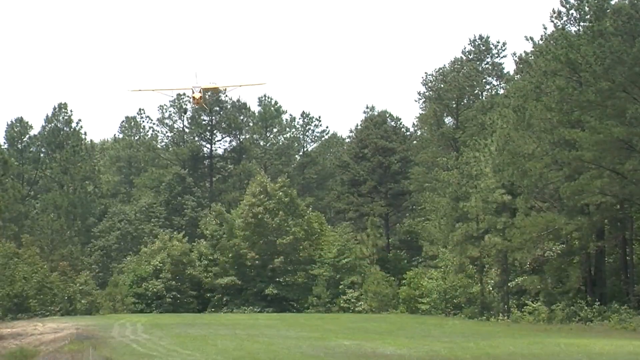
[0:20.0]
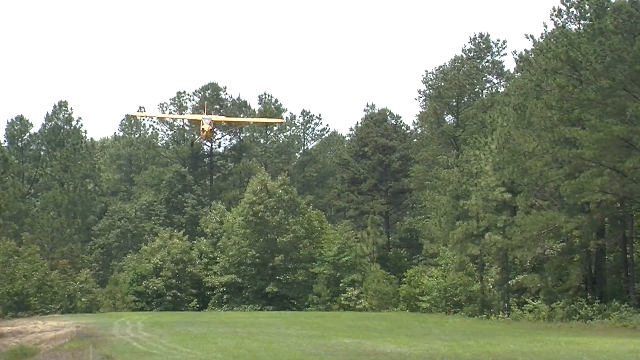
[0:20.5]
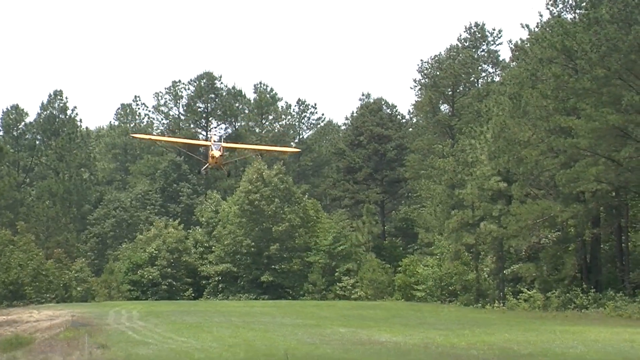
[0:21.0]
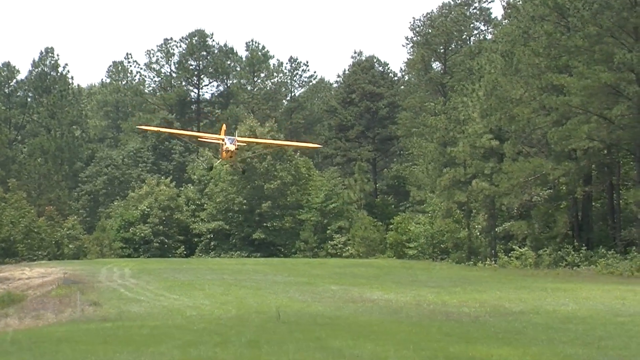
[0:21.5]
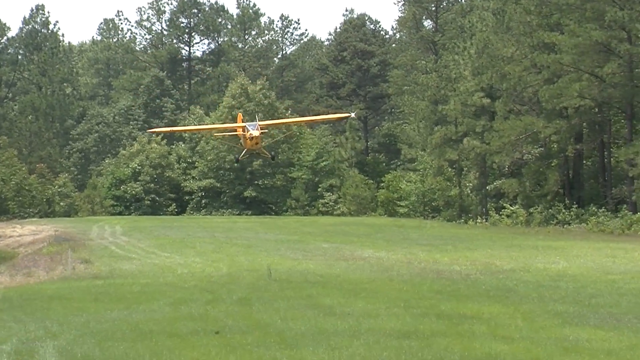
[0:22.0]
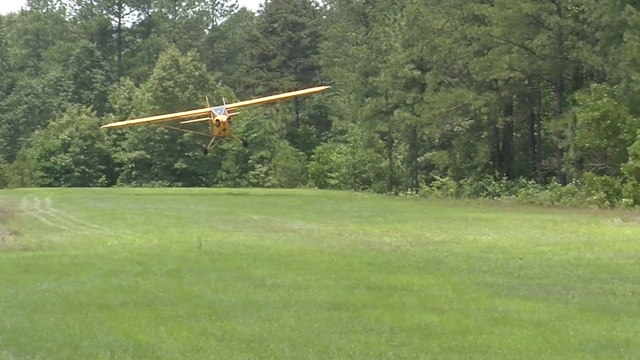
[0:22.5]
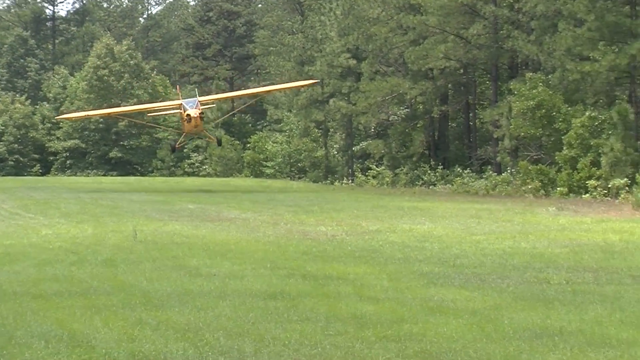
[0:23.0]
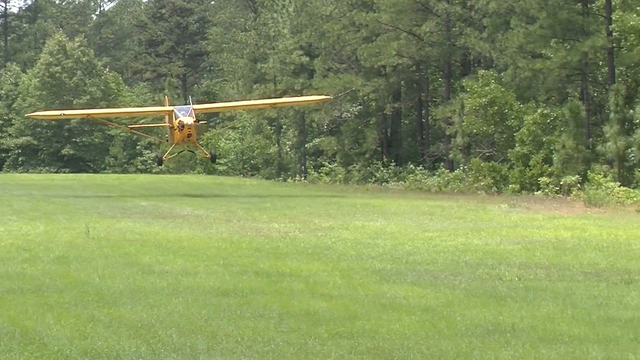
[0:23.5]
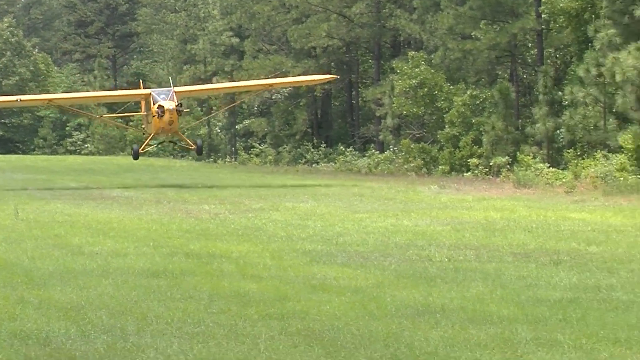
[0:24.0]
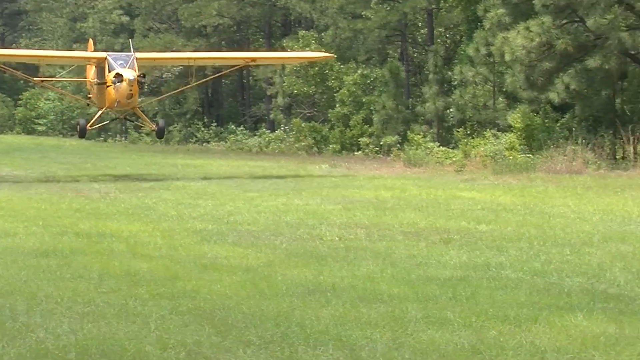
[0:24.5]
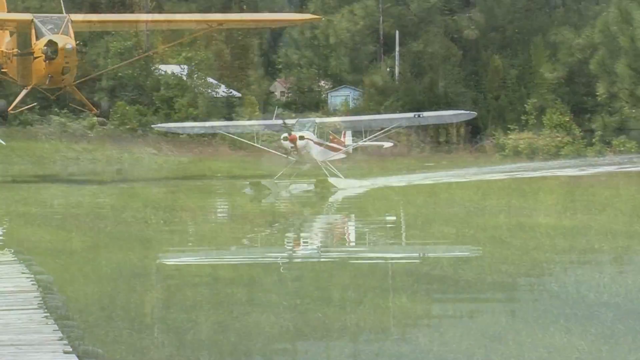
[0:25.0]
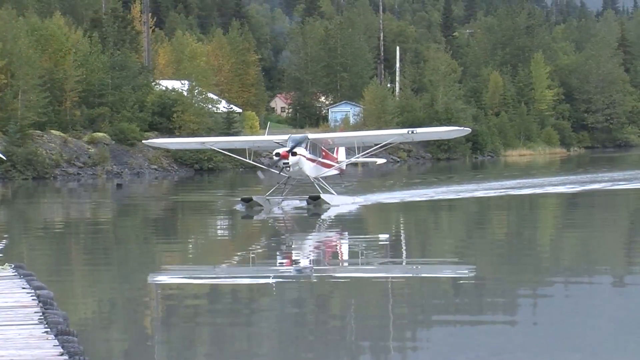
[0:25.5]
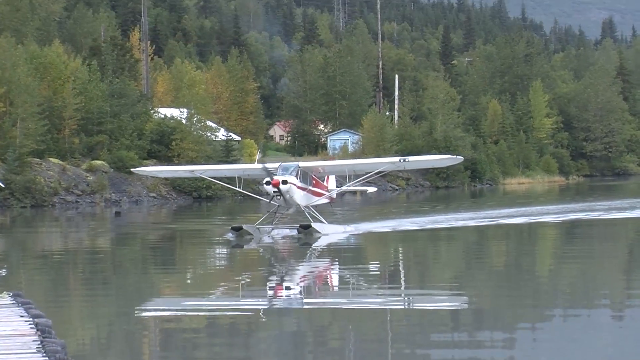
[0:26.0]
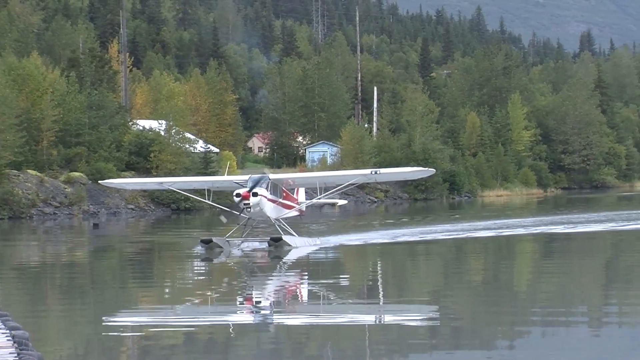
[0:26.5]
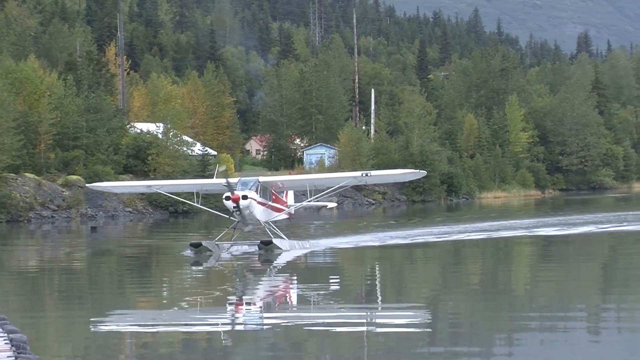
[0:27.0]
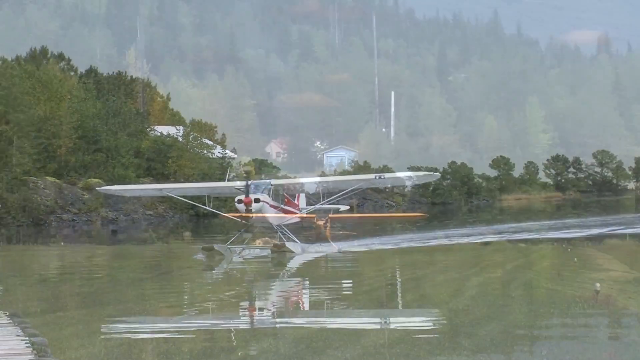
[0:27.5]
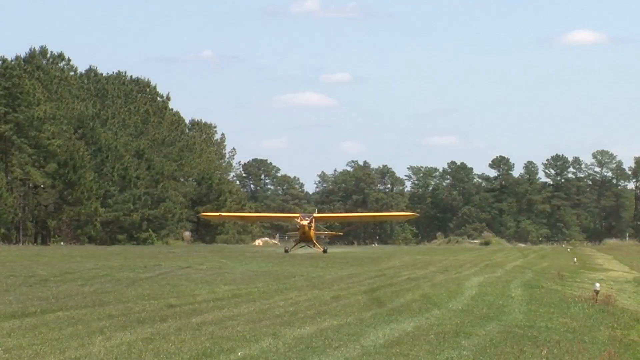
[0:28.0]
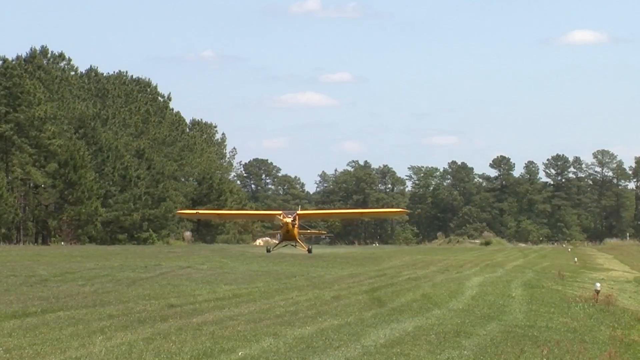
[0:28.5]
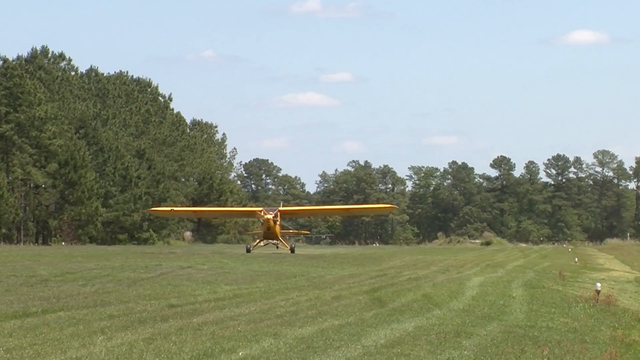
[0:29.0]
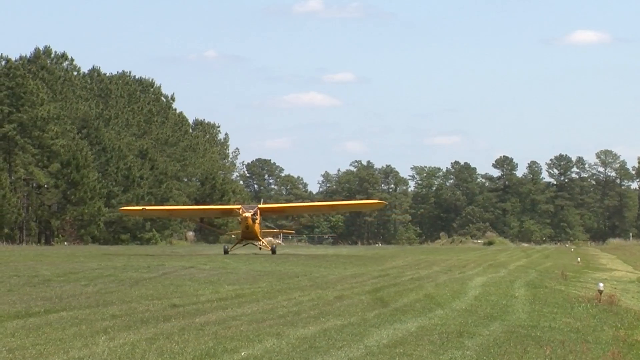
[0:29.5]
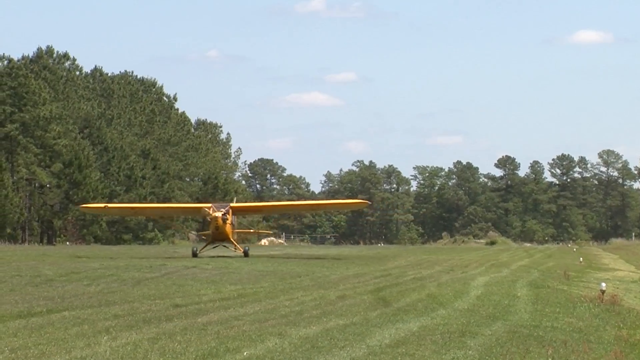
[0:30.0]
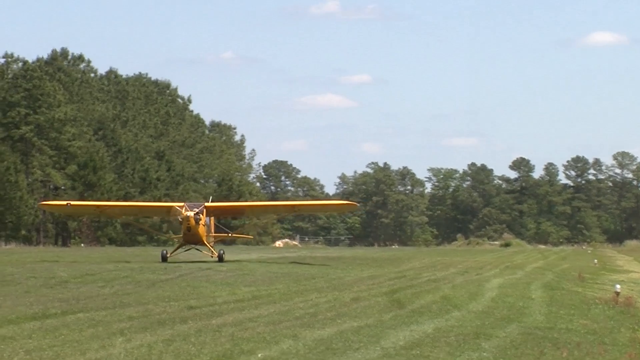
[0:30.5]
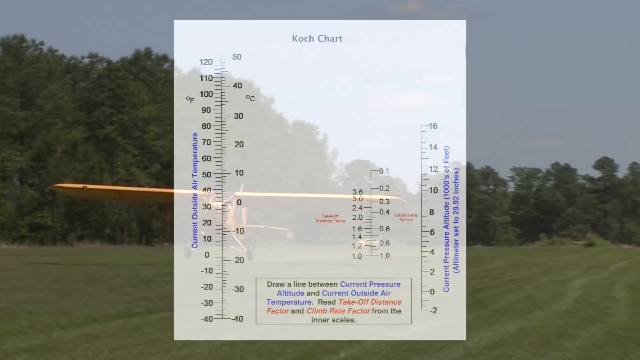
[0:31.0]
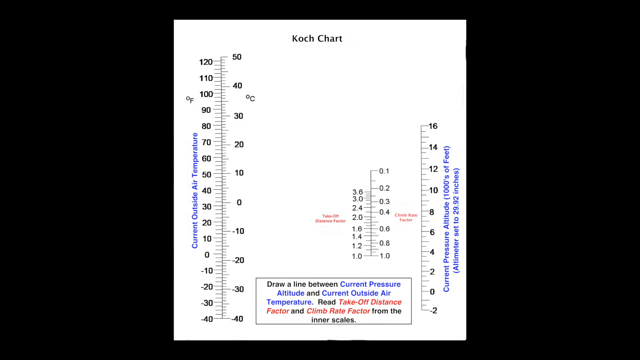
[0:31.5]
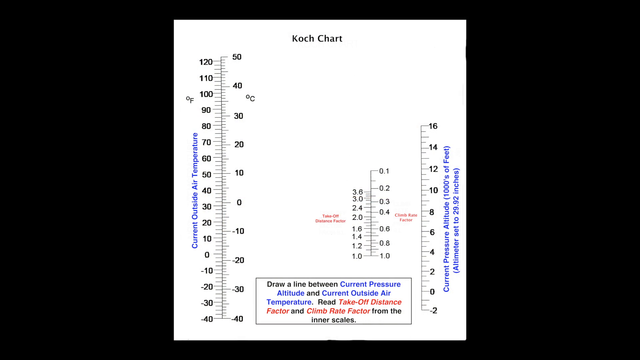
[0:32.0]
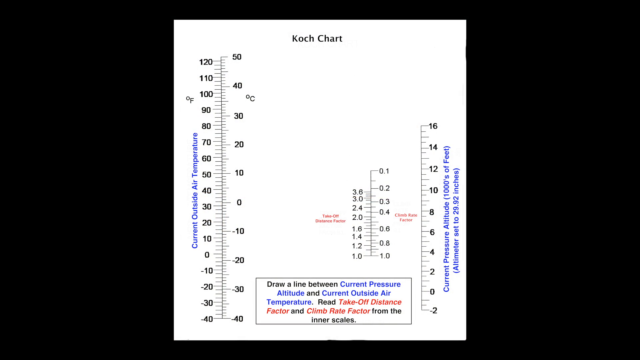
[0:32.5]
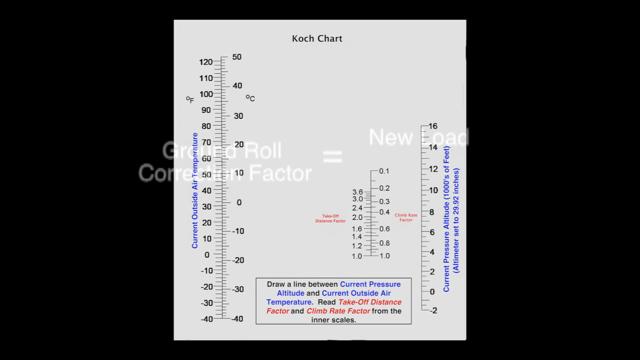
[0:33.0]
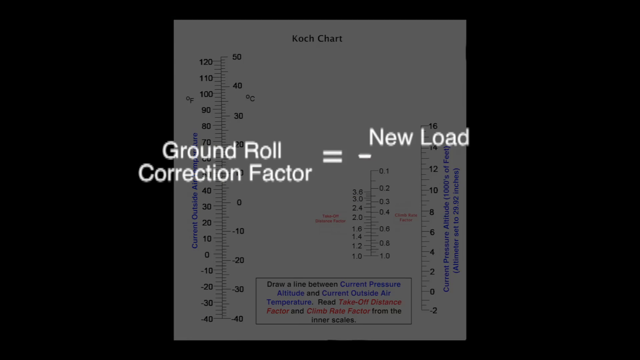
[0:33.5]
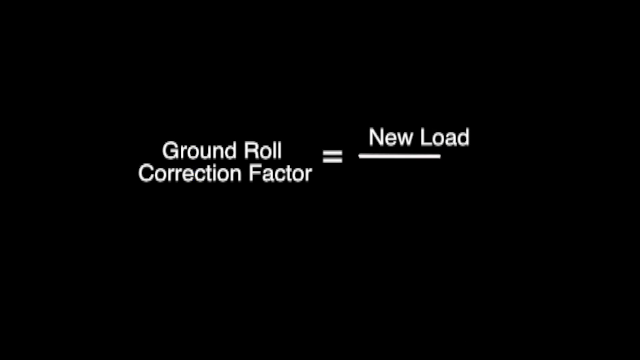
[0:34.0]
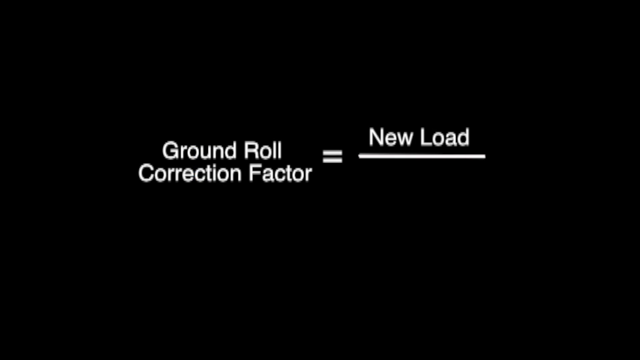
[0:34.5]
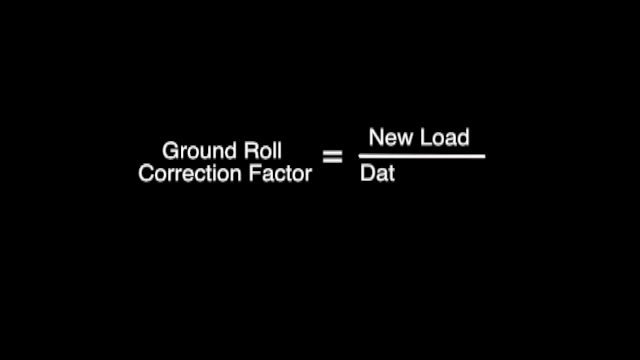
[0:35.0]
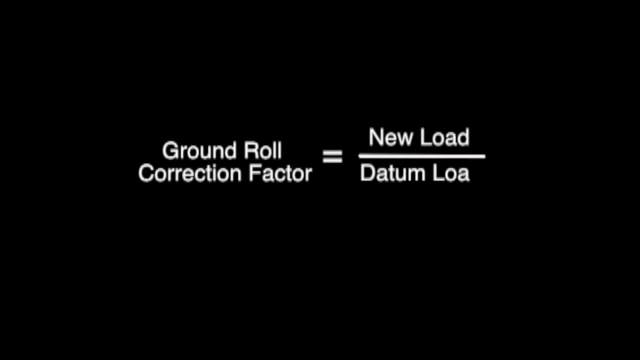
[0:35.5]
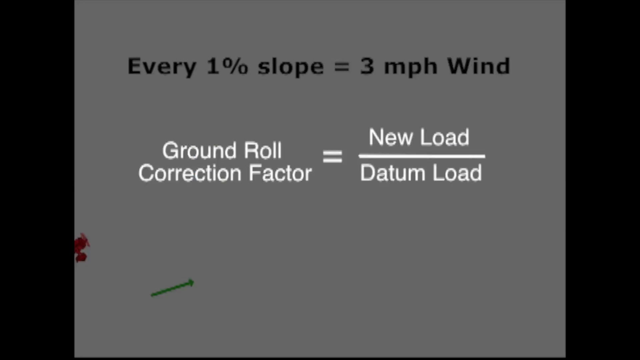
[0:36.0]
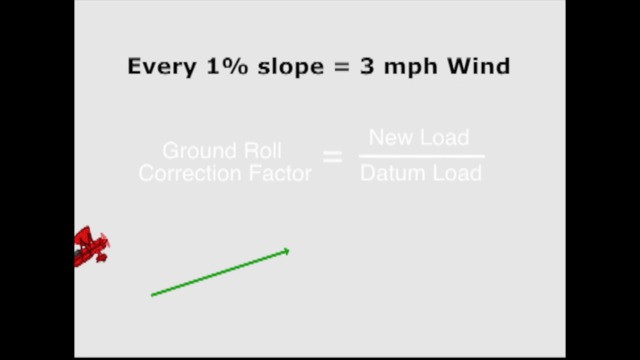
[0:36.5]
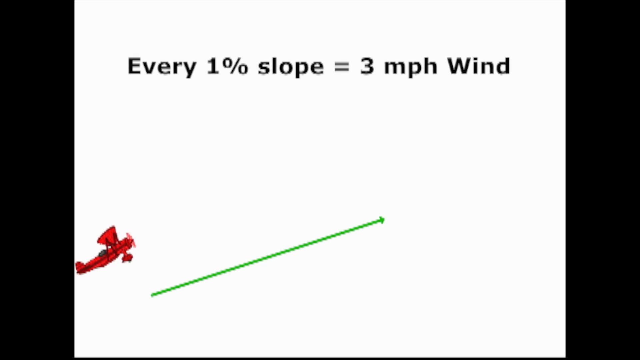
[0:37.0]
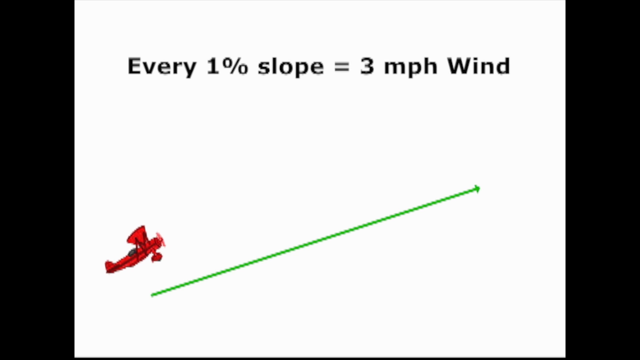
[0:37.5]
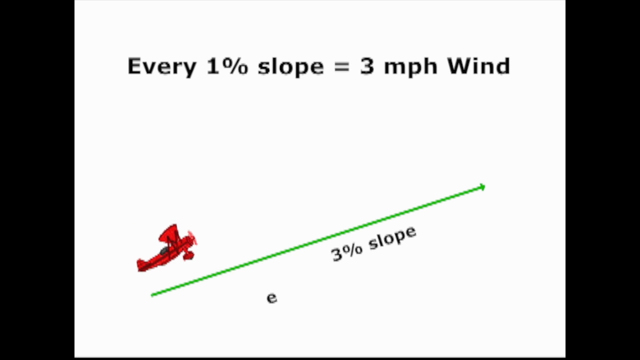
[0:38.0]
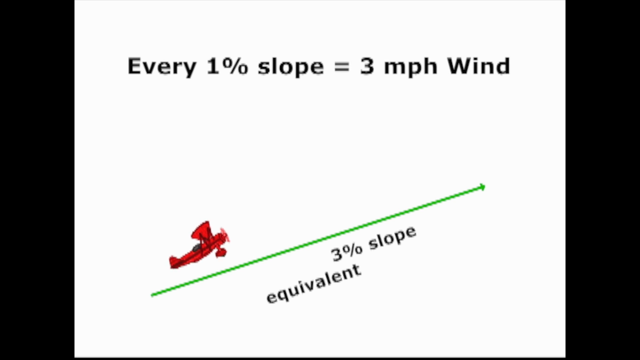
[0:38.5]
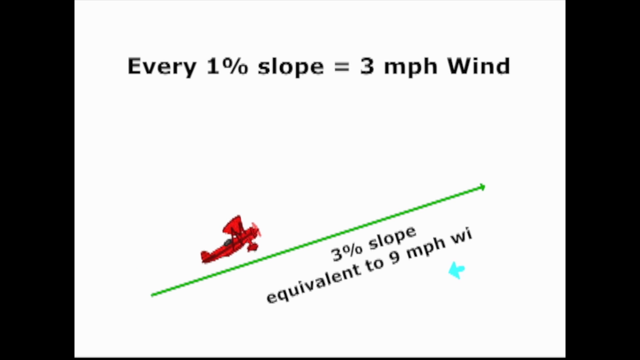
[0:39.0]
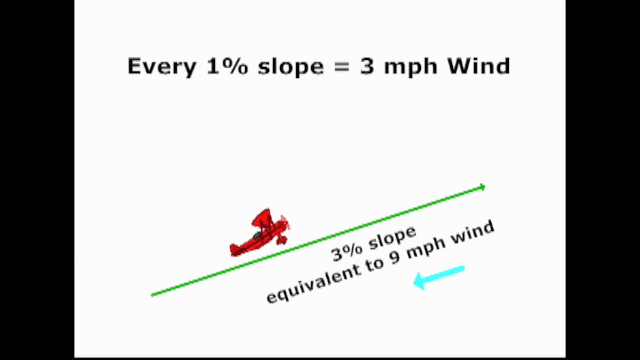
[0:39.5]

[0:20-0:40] A tiny yellow plane lands; it looks like it only has room for one person. A different plane then lands, this one with retrofitted landing gear so it can land on water; it looks like two people might be able to sit in it, one in front and one behind. It lands in a river or lake of some sort, in a place that does not seem to be Africa, as the trees look more like pine trees. The footage returns to the tiny yellow plane, and then an image appears that says it is the "Koch chart." One measurement is the current outside air temperature, and instructions say to "draw a line between the current pressure, altitude, and current outside air temperature" and to "Read the takeoff distance factor and the climb rate factor from the inner scales." Then, on an all-black background in white text, it says "ground roll correction factor equals new load datum load" and "every 1% slope equals three miles per hour of wind."